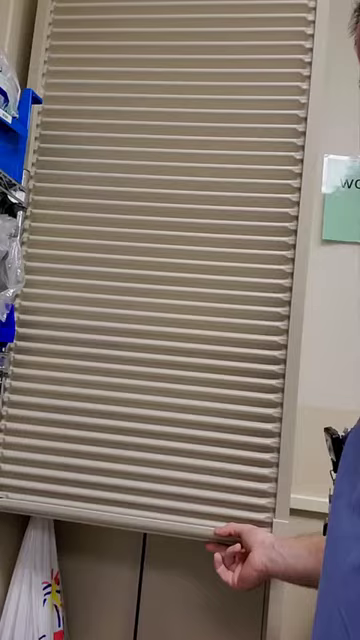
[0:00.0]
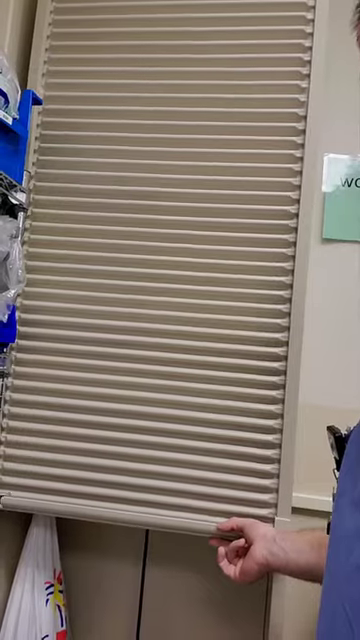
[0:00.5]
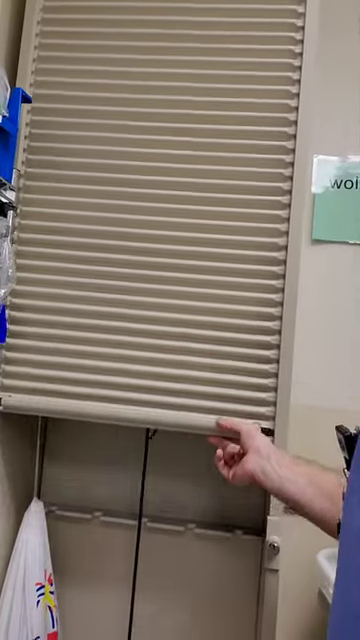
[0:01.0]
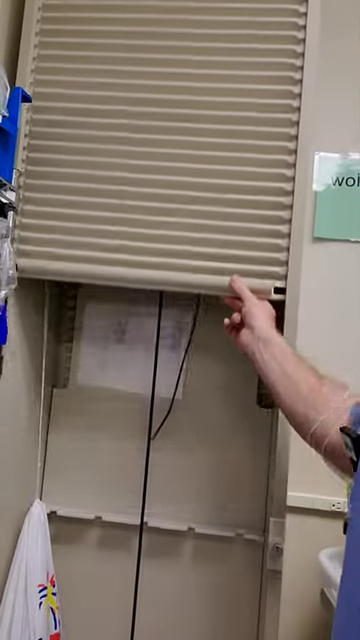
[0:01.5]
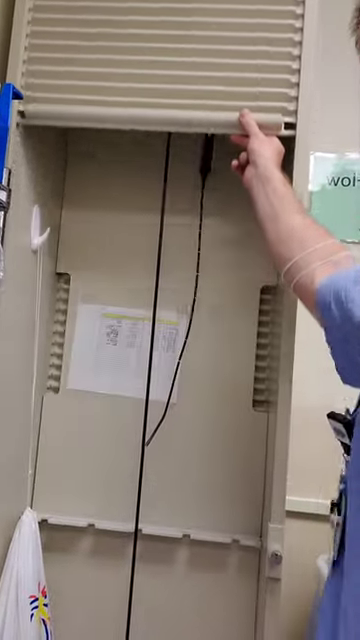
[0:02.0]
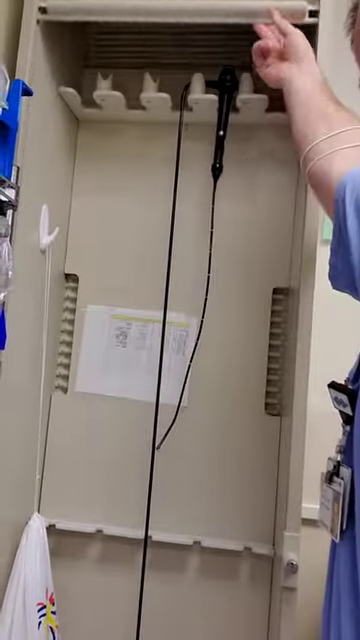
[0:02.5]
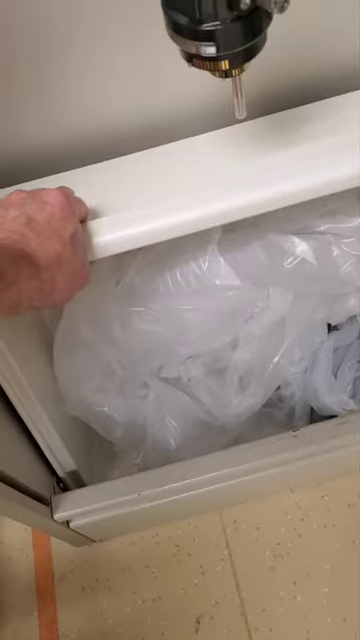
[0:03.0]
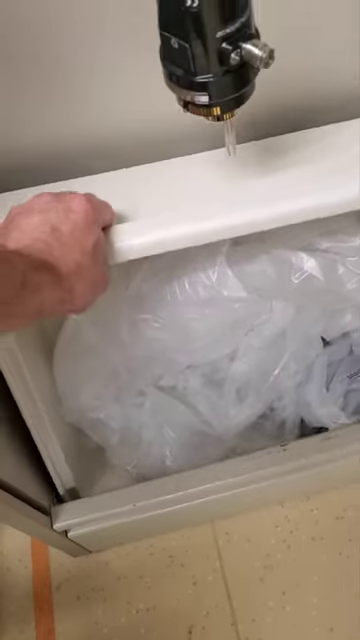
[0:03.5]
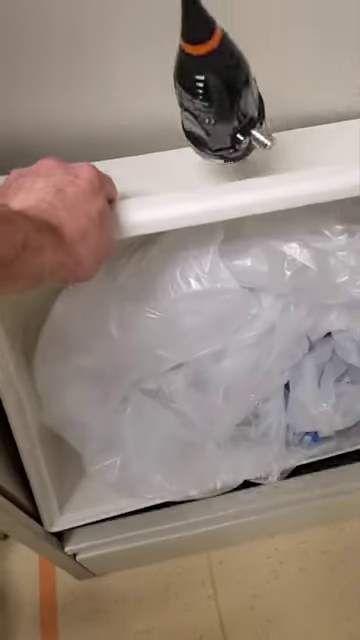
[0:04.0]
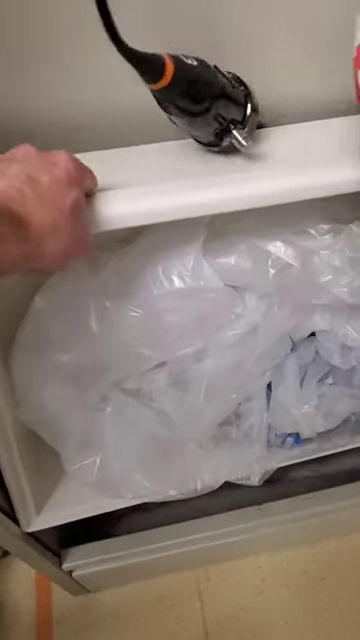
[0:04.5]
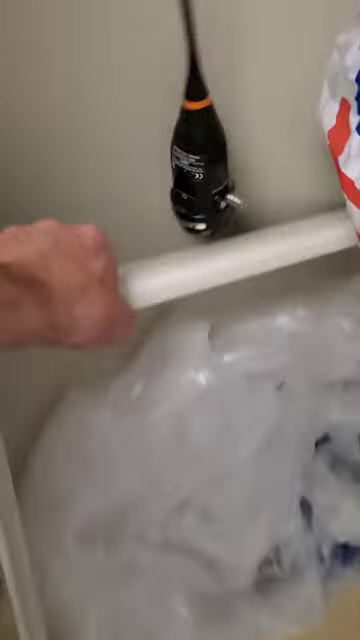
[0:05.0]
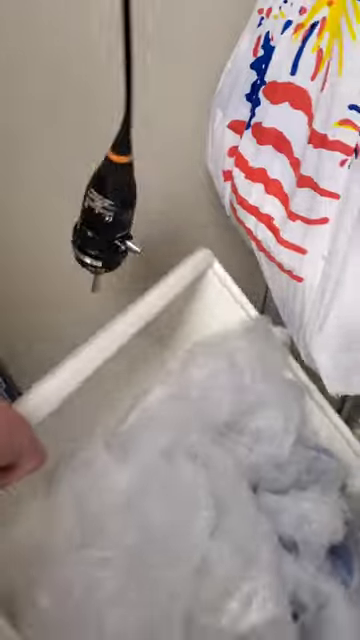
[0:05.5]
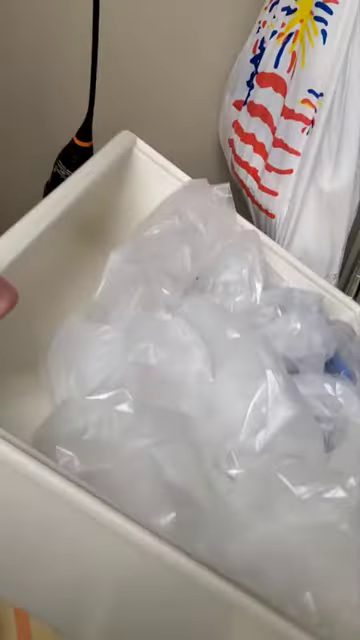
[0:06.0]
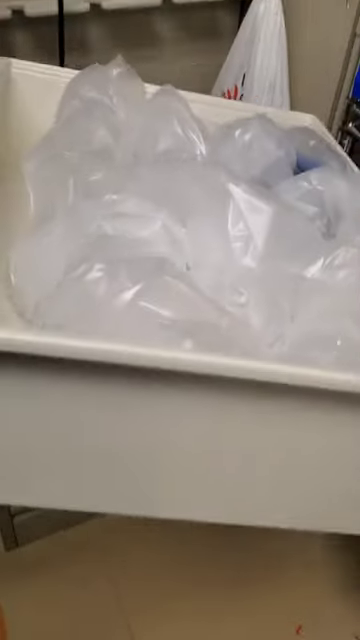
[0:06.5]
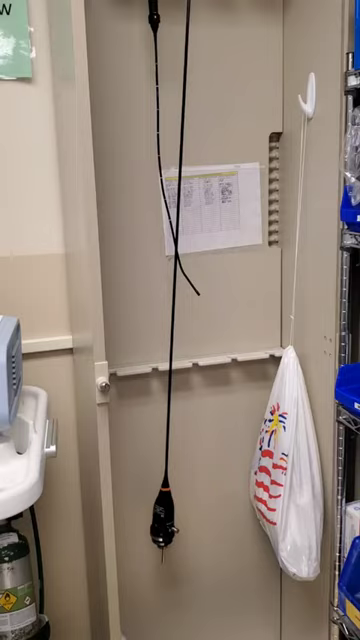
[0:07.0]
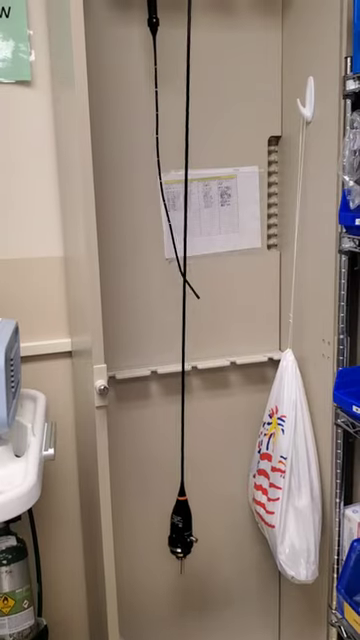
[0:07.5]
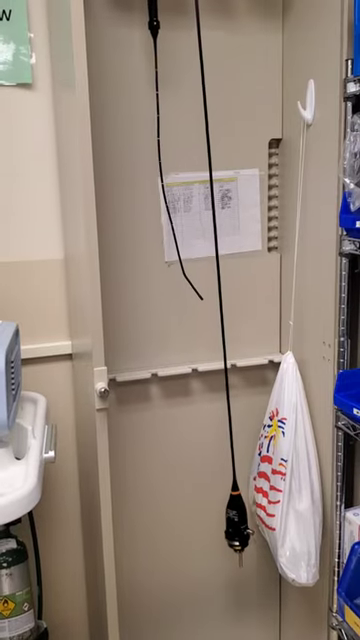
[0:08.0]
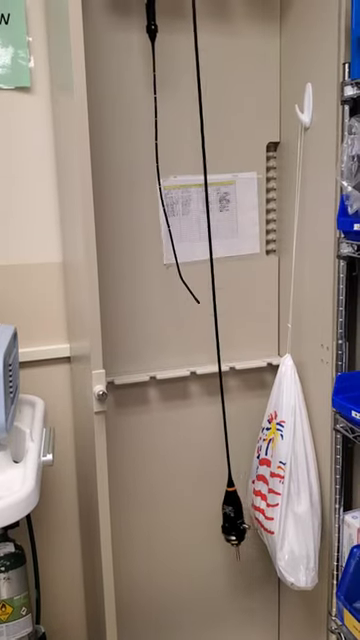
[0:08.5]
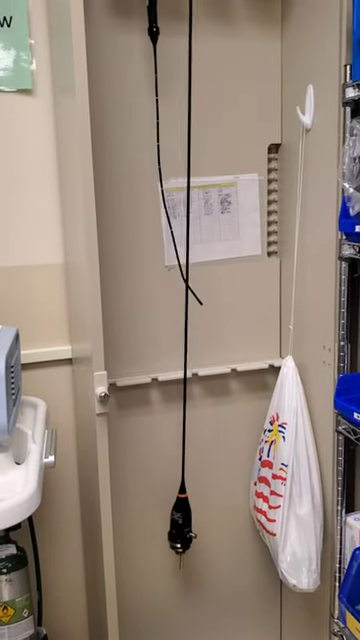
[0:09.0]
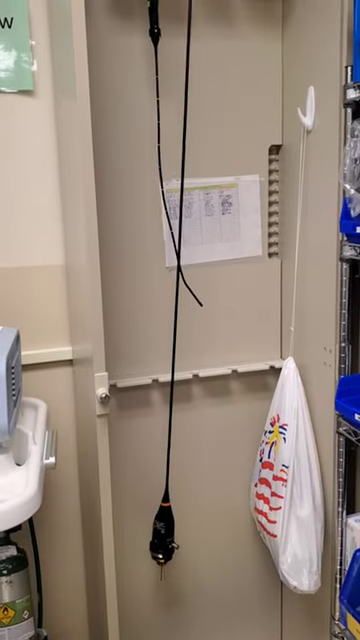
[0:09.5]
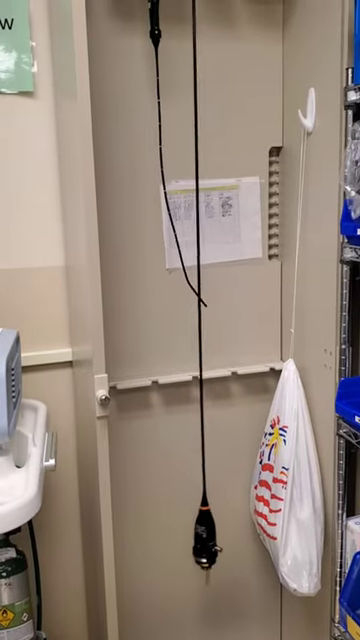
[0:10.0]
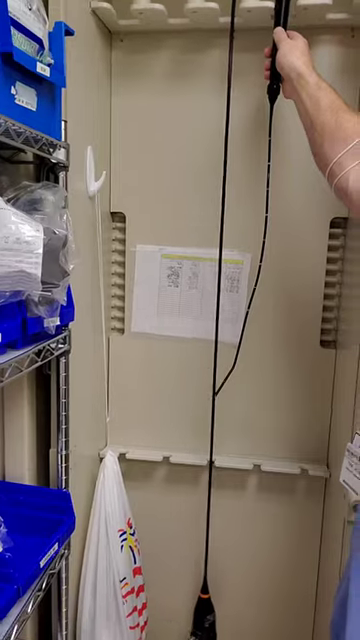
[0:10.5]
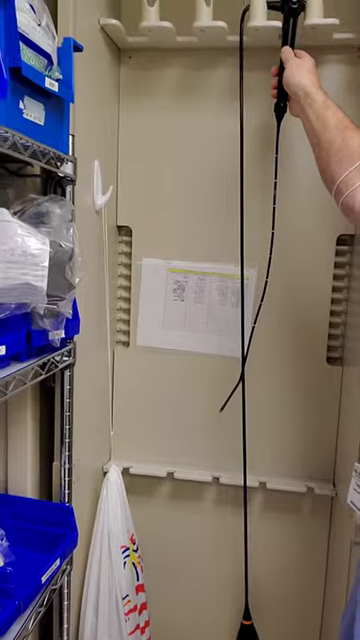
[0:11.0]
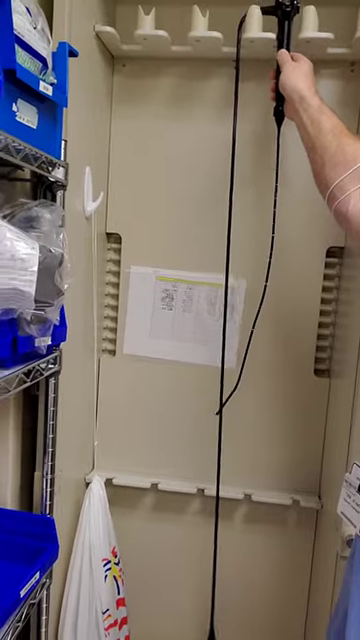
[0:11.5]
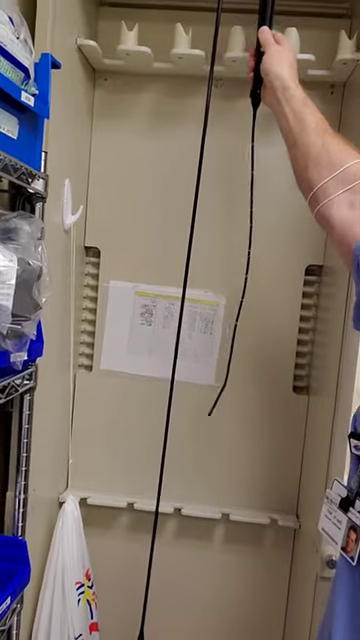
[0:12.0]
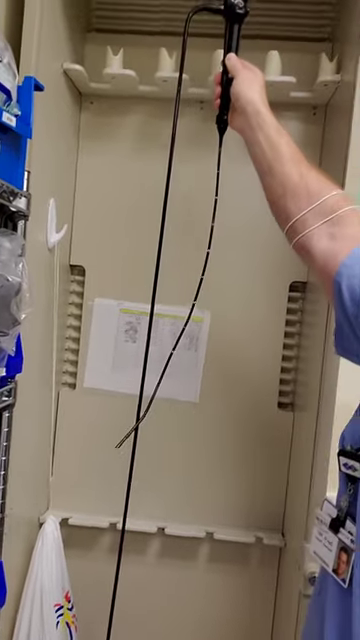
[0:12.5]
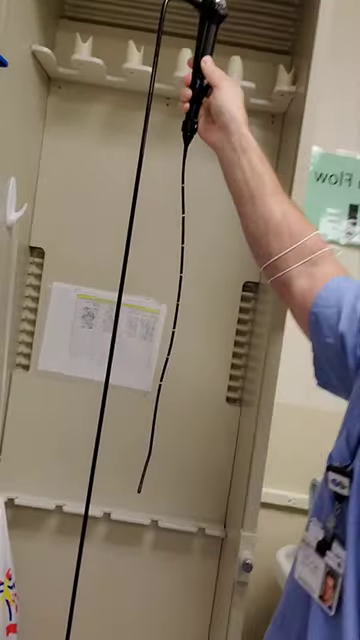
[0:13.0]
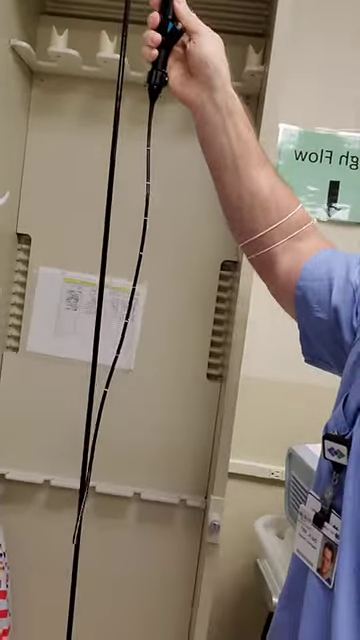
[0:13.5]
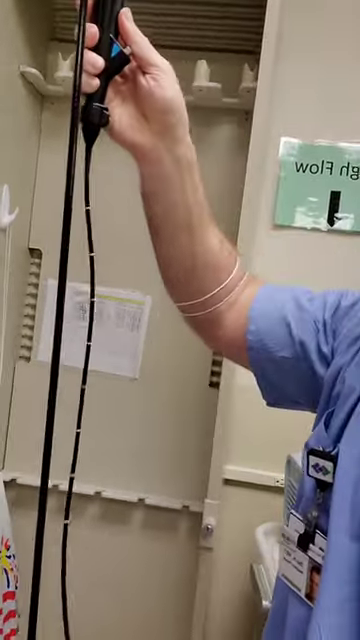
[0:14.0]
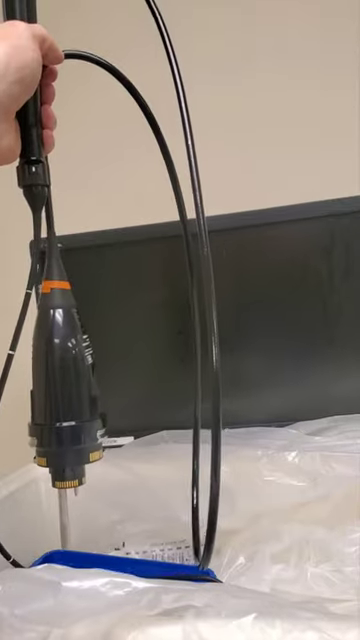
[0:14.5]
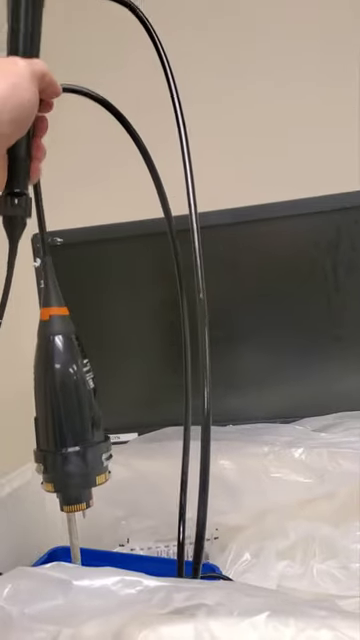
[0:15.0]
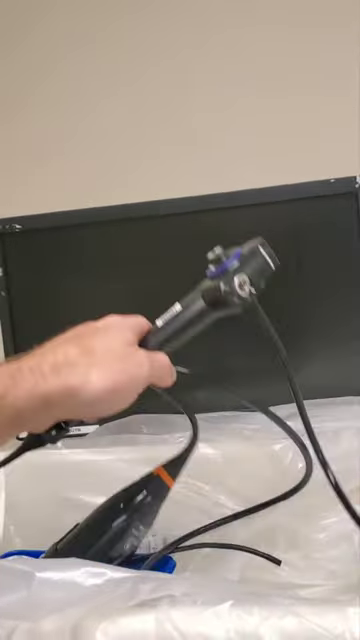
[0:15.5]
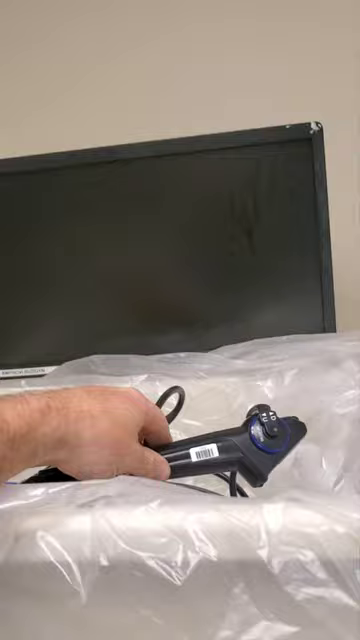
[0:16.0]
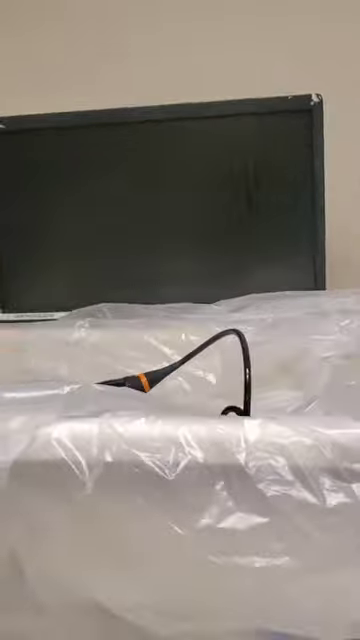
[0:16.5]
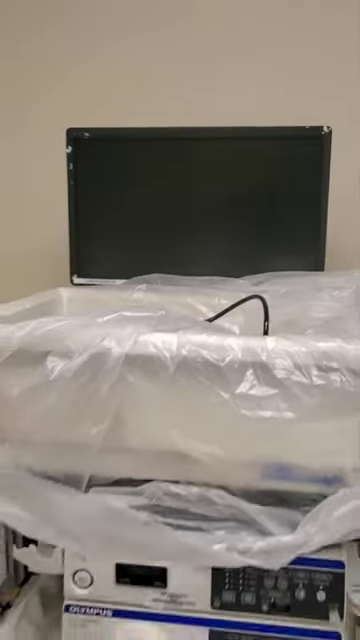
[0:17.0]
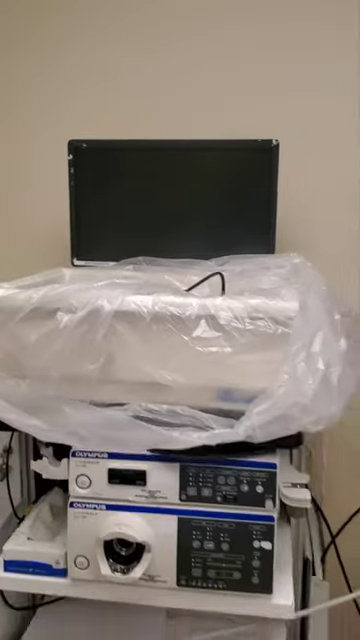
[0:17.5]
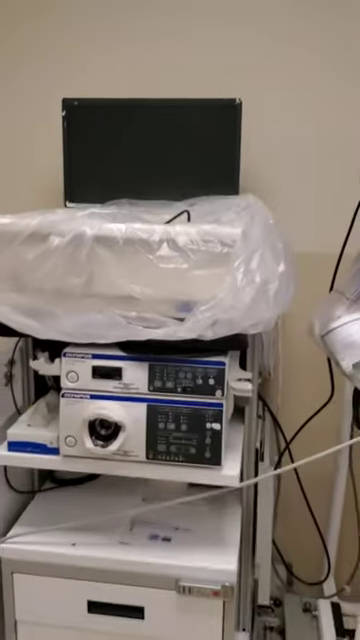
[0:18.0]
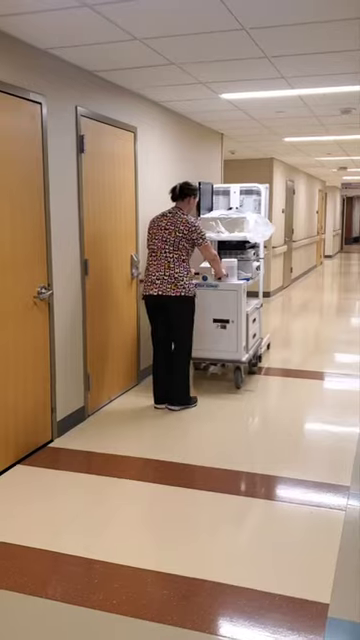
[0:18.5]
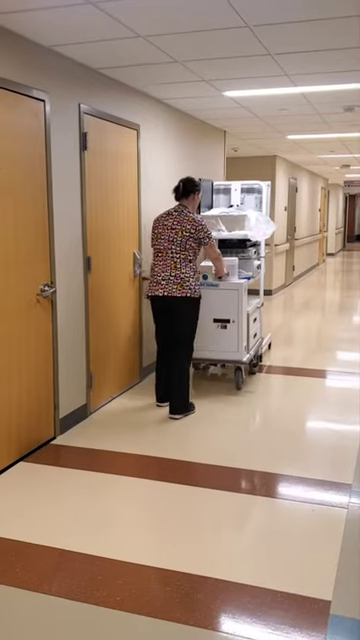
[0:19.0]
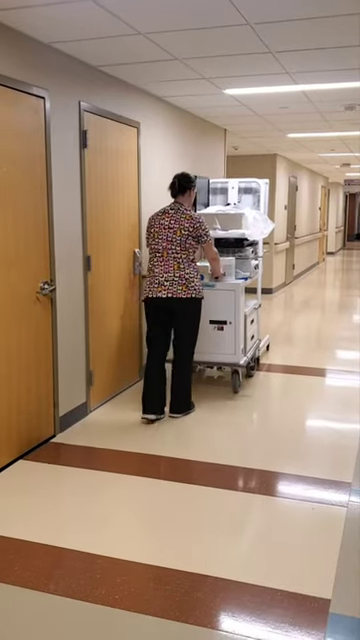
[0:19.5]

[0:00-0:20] The video appears to be recorded inside a hospital or medical office. A person, apparently wearing typical blue scrubs with a badge, records themselves opening some type of hidden wall unit that stores a specific device, possibly a medical device needed for a procedure. The device is black and looks like a handheld device with wiring that connects to what may be a power source. The scene moves within the medical room, where there is also a drawer filled with some type of plastic. The person sets the handheld device in the drawer with the plastic, and the video then transitions to another person pushing a cart. On the cart are the drawer with the plastic, the black handheld device, and a monitor. This woman wears scrubs: the top looks multicolored, she has black scrub pants, and her hair is tied back.